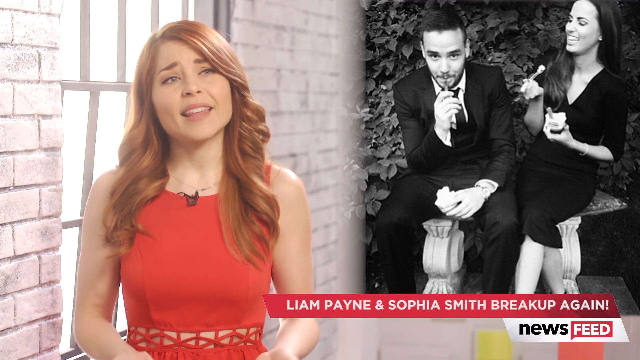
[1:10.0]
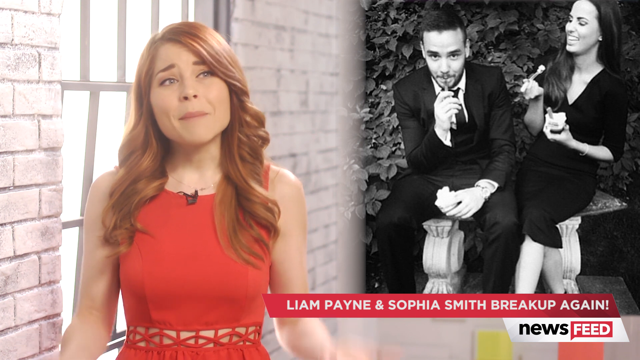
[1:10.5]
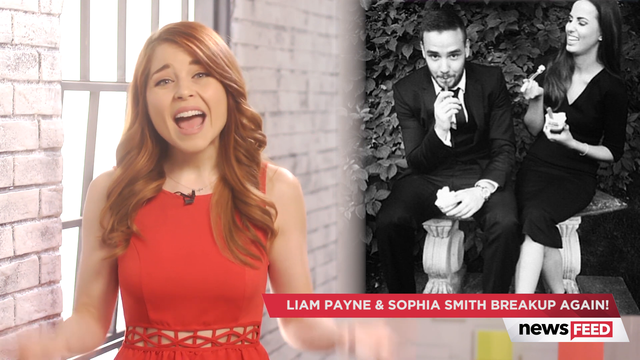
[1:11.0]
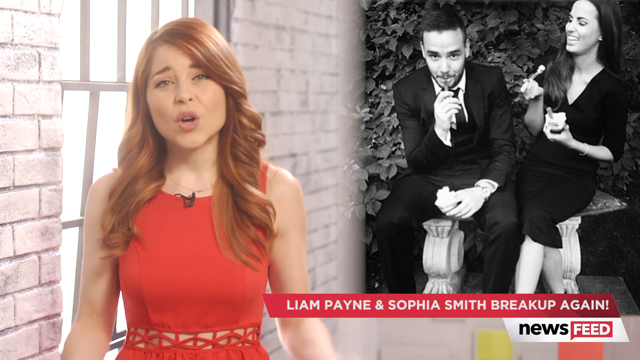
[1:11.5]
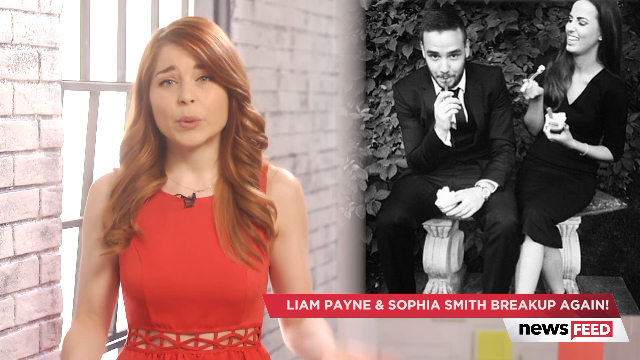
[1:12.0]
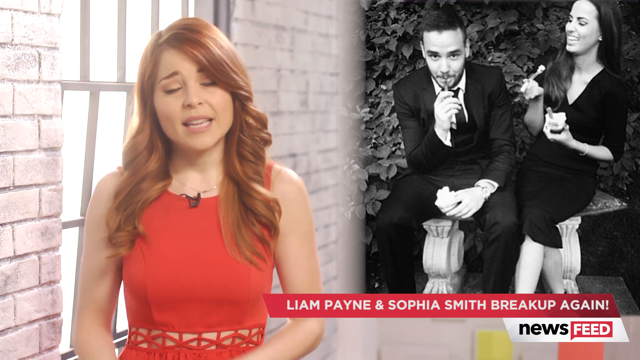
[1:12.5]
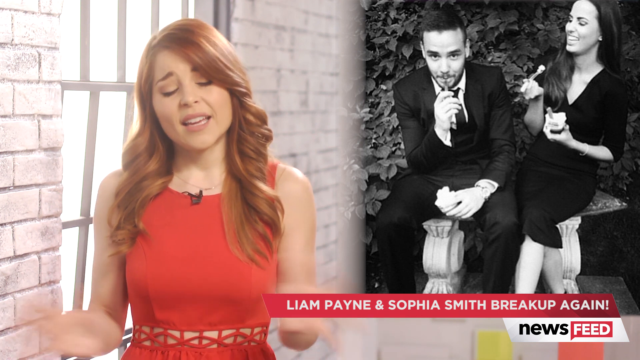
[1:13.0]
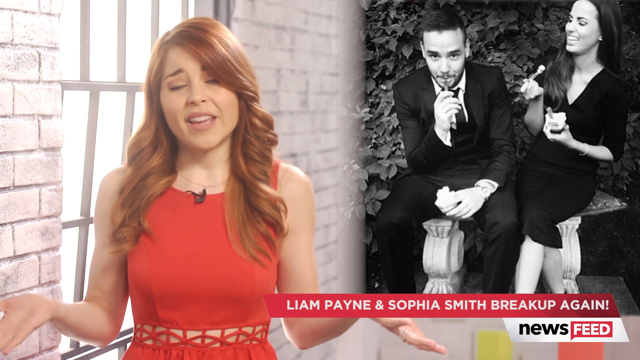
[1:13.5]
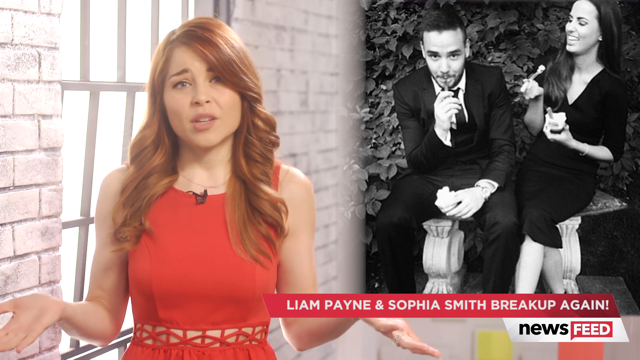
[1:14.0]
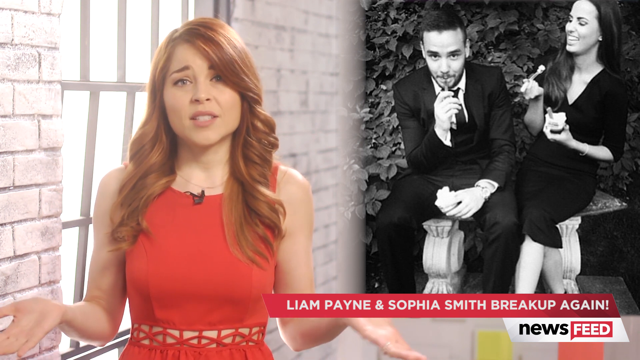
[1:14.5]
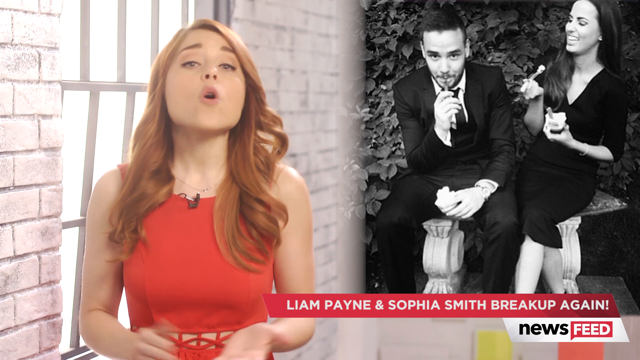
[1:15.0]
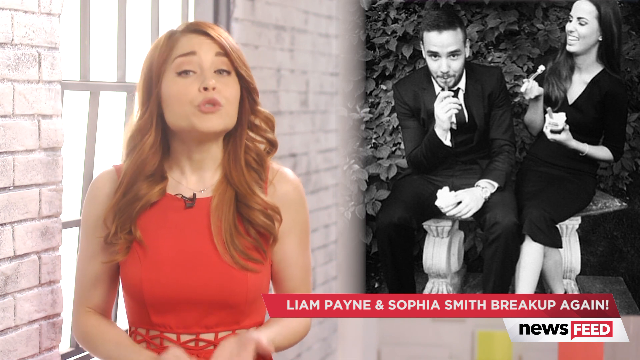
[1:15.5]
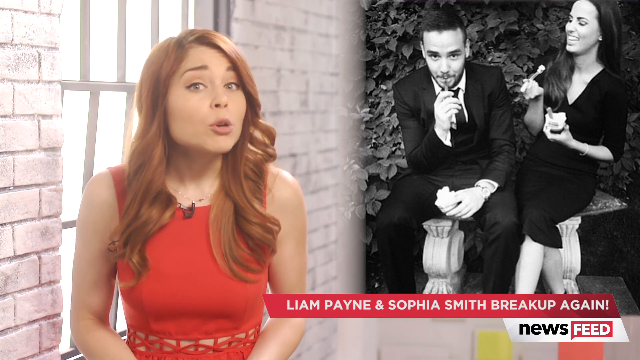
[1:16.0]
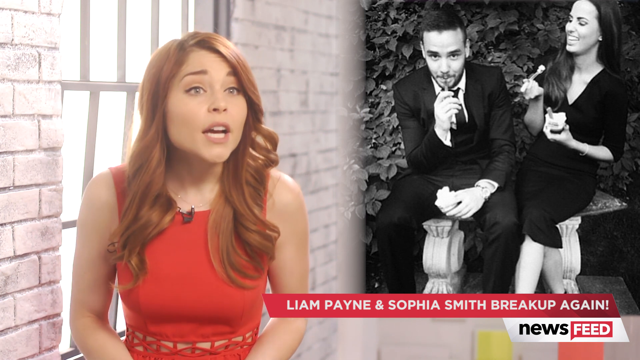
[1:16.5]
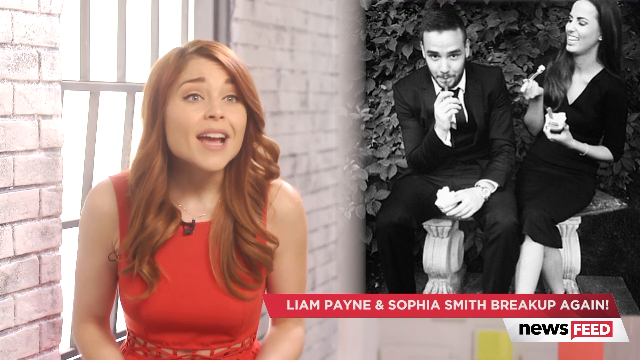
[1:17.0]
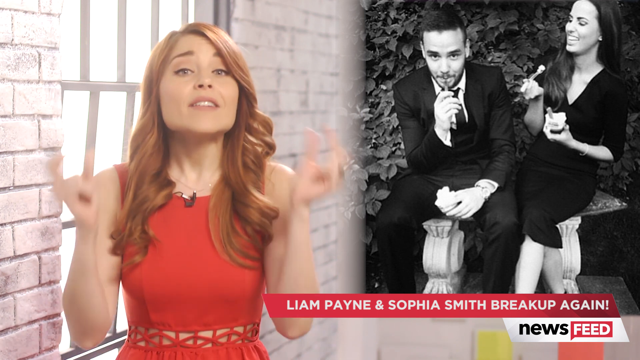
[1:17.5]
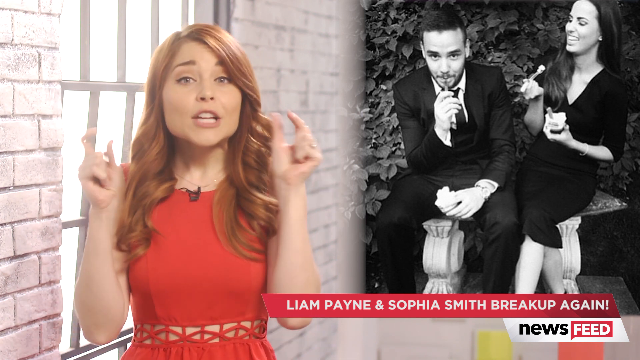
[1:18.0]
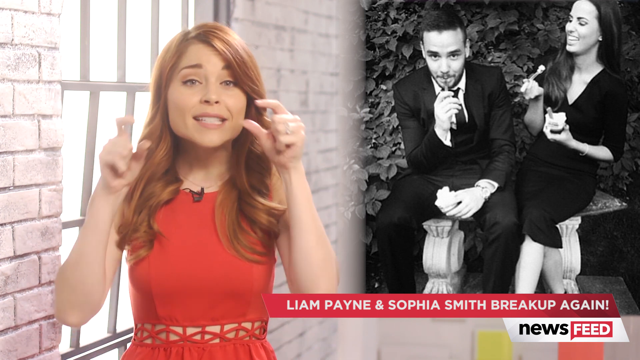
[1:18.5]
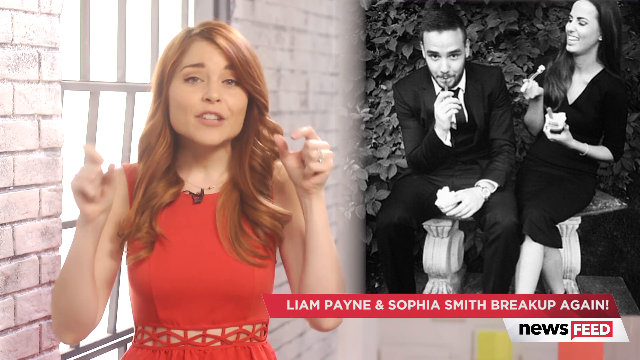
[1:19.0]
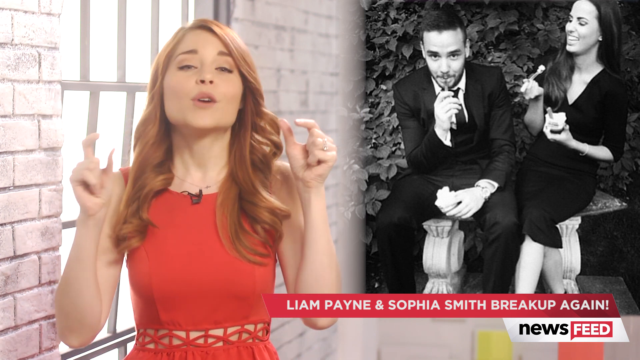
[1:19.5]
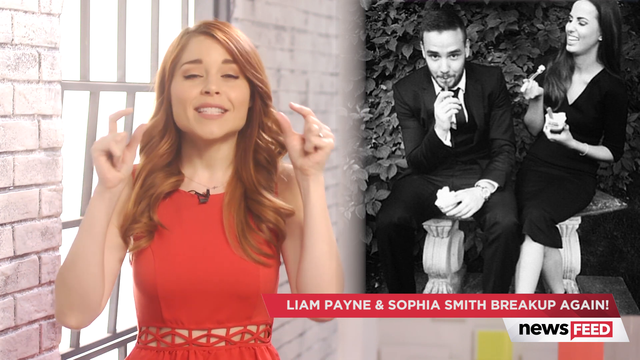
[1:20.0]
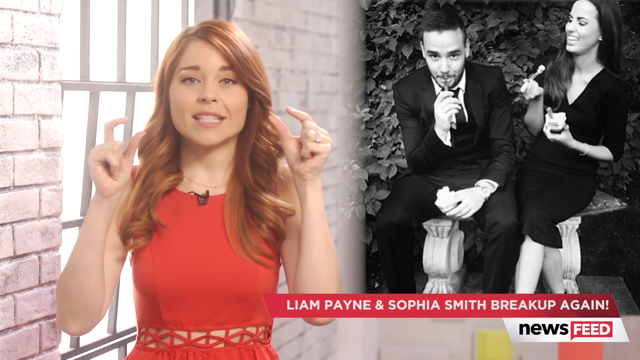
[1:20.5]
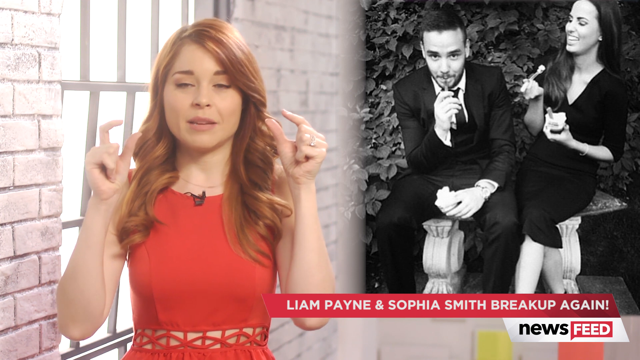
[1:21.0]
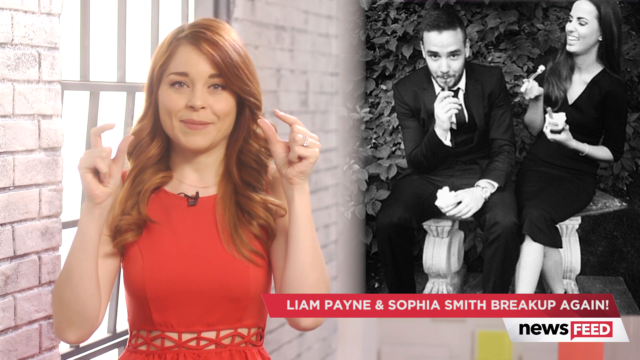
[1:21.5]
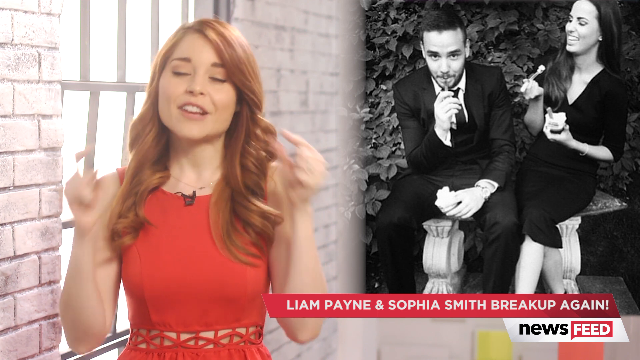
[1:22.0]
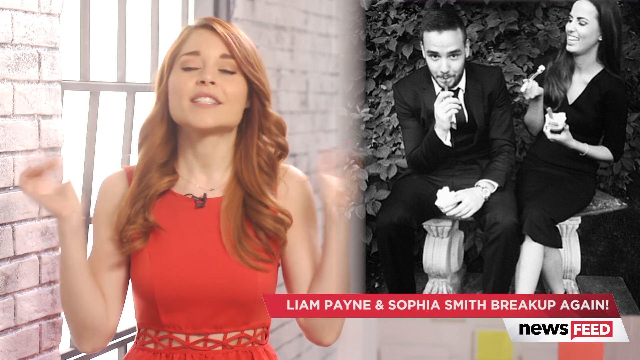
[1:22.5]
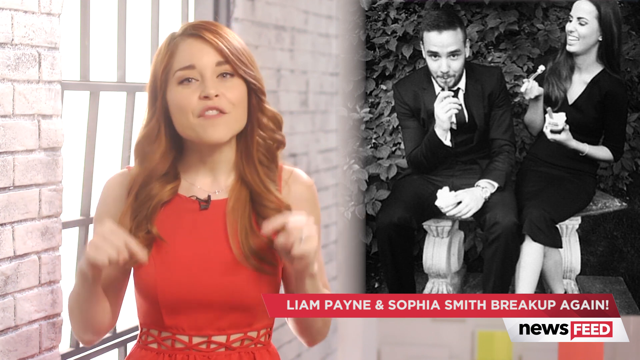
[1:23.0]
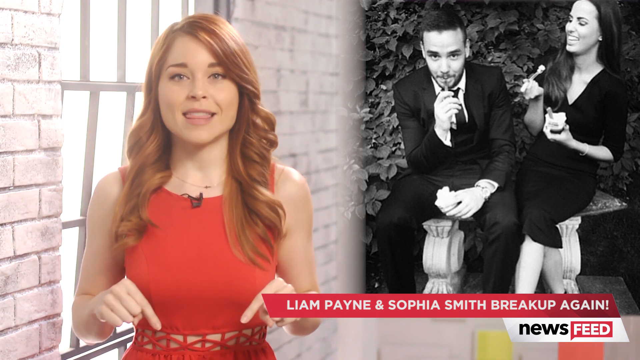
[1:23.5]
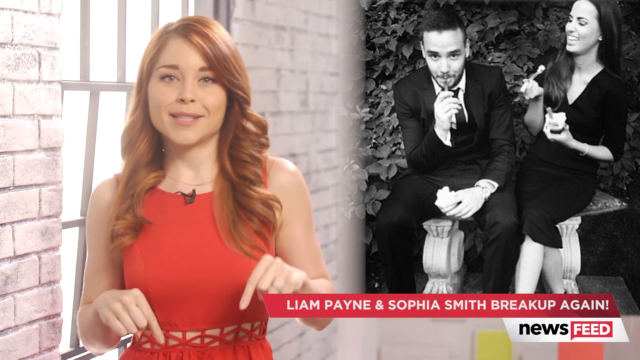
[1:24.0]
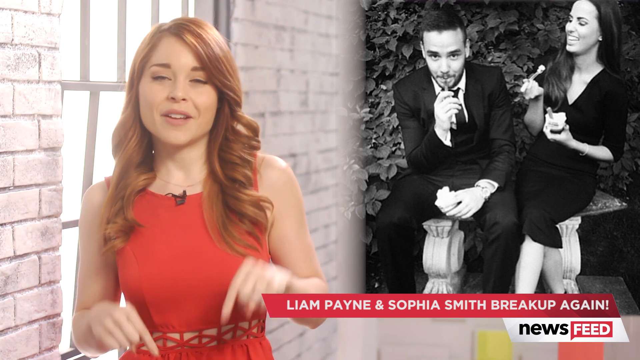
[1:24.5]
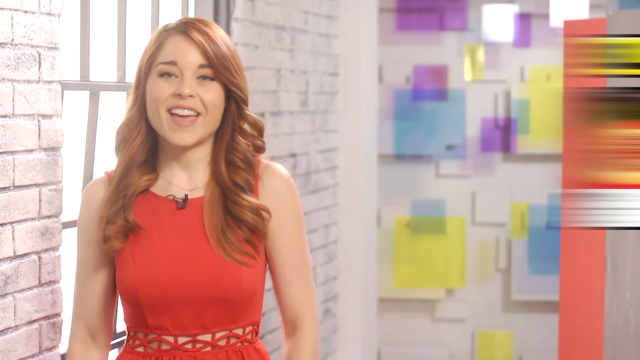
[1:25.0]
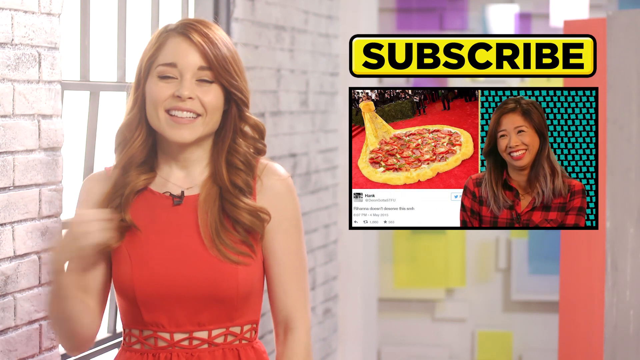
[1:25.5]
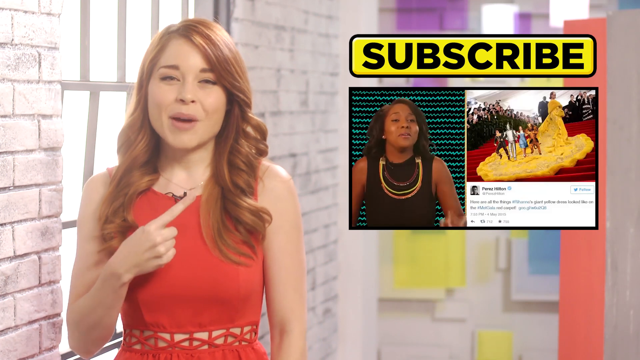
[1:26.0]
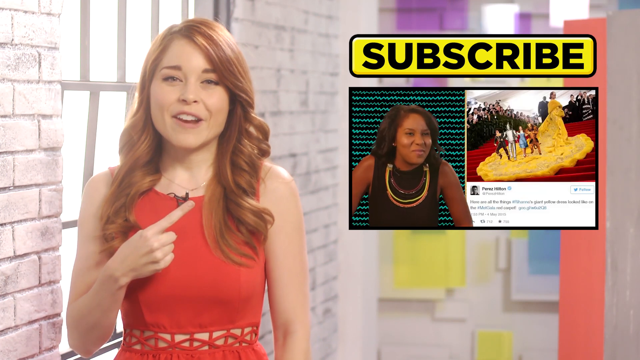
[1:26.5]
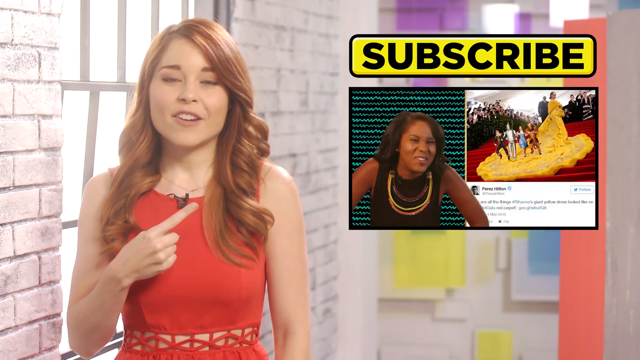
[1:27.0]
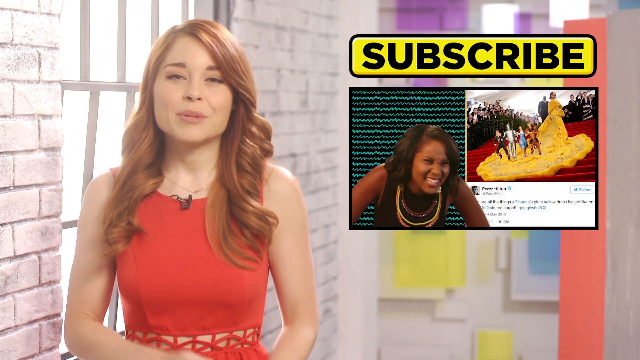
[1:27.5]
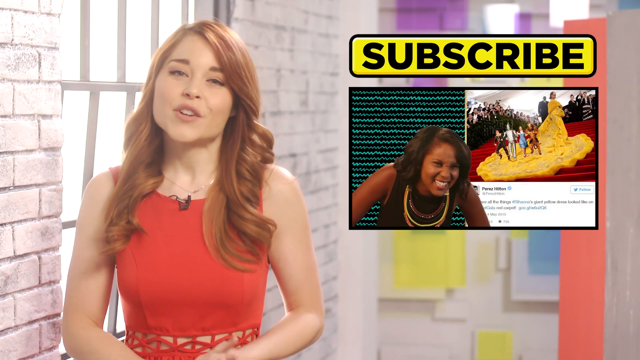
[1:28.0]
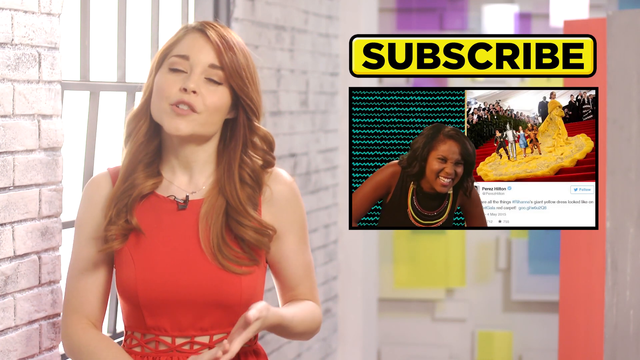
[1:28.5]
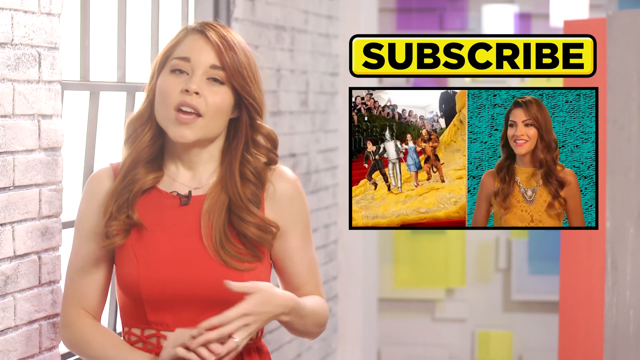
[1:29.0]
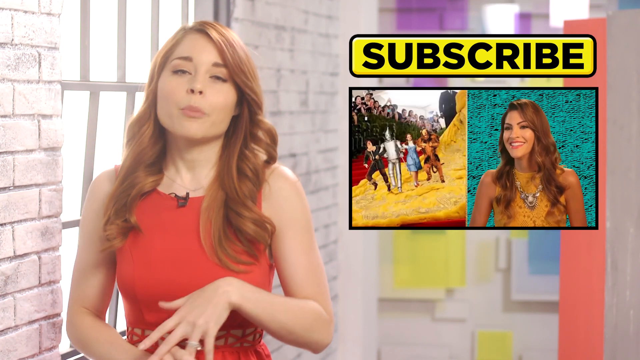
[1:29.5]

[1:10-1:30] A news reporter in an orange dress with brown hair appears next to a photo of two individuals sitting down, with a tray behind them. They are wearing black clothing: the man wears a suit with a white shirt and a black tie, and the lady wears a black dress and has long dark brown or black hair. They are sitting and eating ice cream. Text below reads "Liam Piney and Sophia Smith break up again". The reporter is talking, using her mouth and her hands. The video then changes to a small video with the word "subscribe" at the top, written in black on a yellow column. Below it is a picture of a woman against a black background with blue and gray lines. Next to her is an image of a red carpet, where a lady in a yellow dress is climbing the stairs.